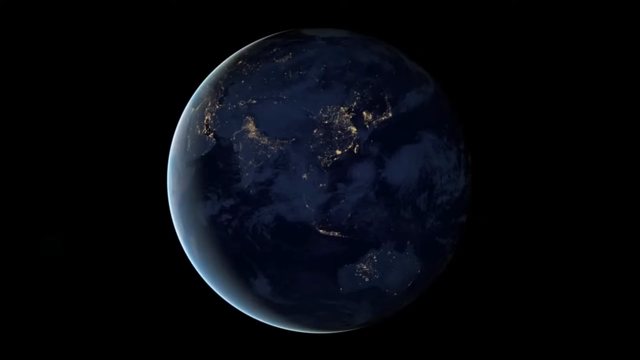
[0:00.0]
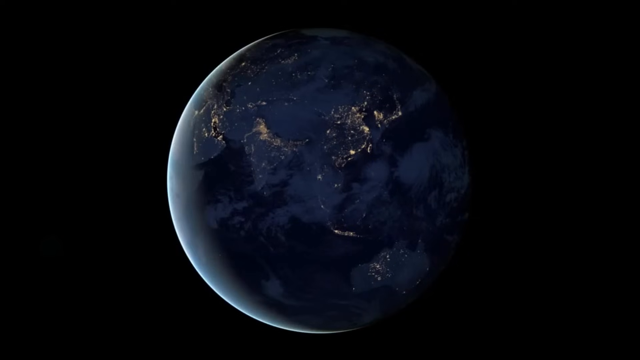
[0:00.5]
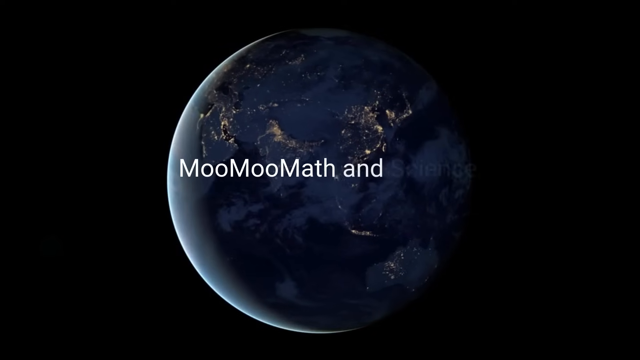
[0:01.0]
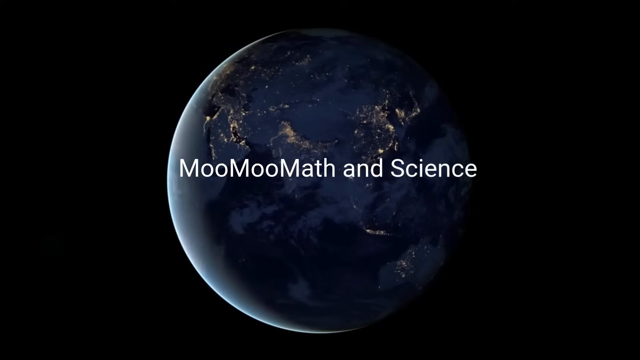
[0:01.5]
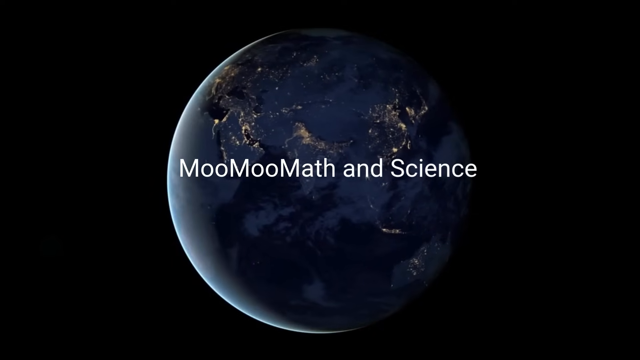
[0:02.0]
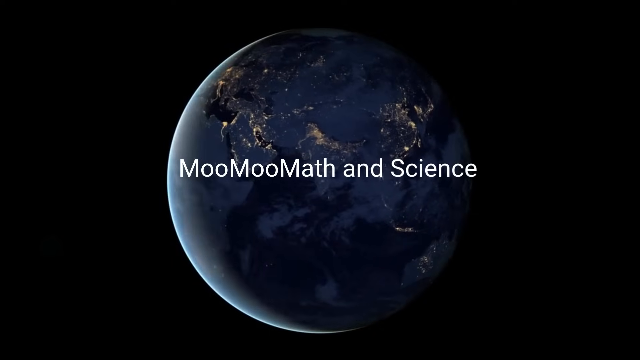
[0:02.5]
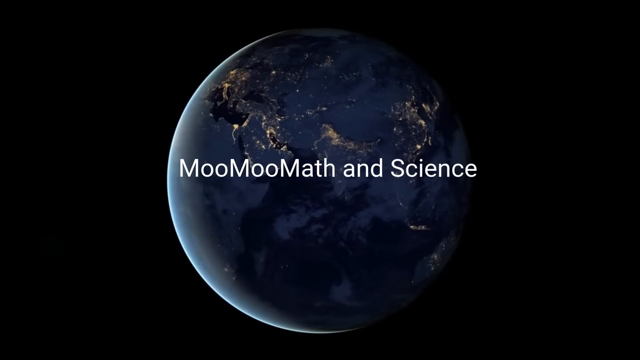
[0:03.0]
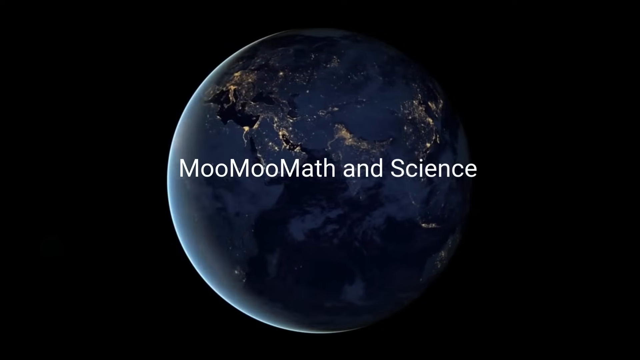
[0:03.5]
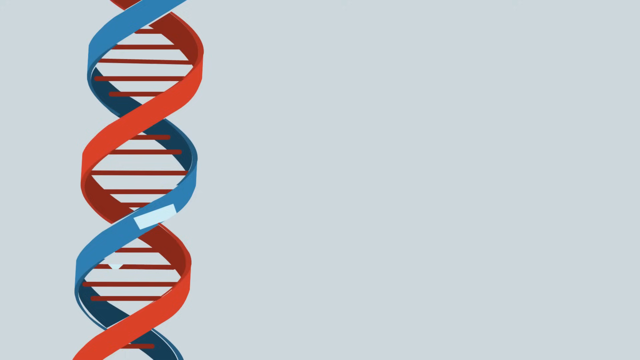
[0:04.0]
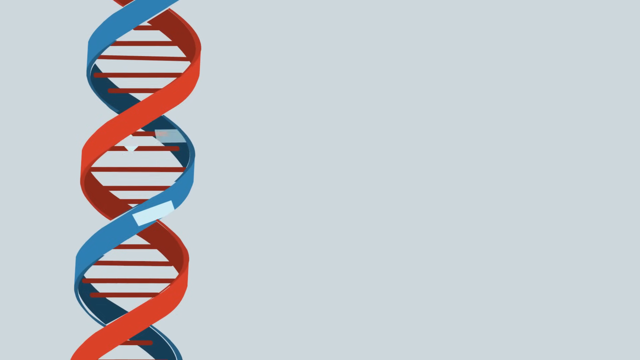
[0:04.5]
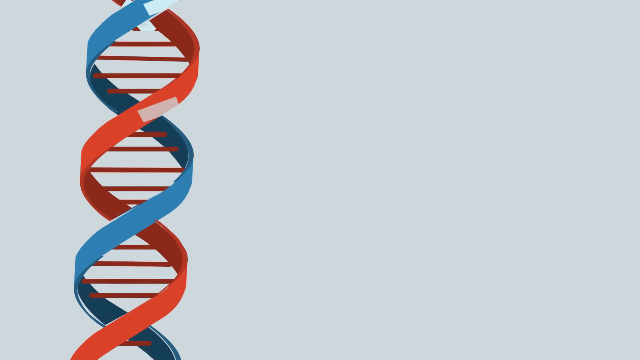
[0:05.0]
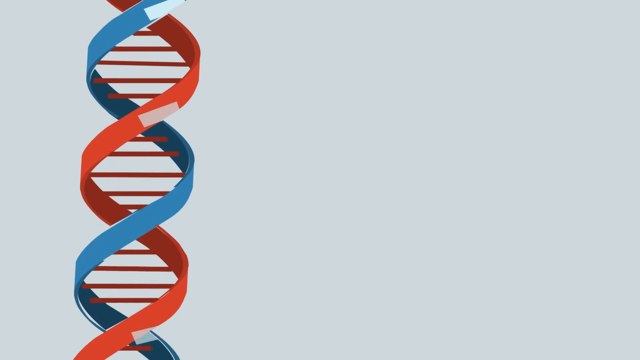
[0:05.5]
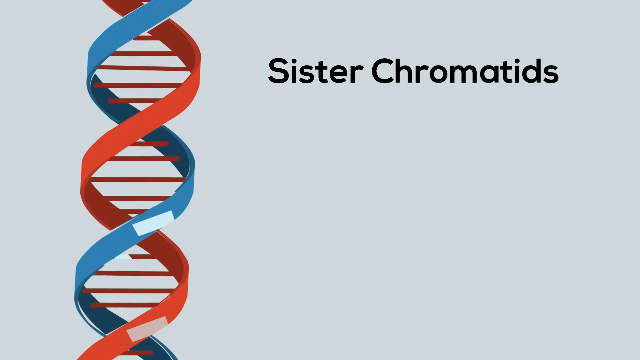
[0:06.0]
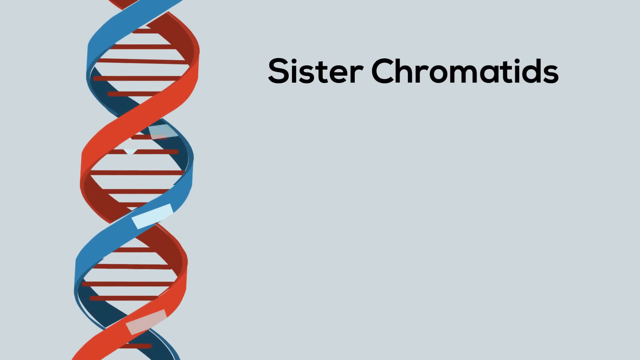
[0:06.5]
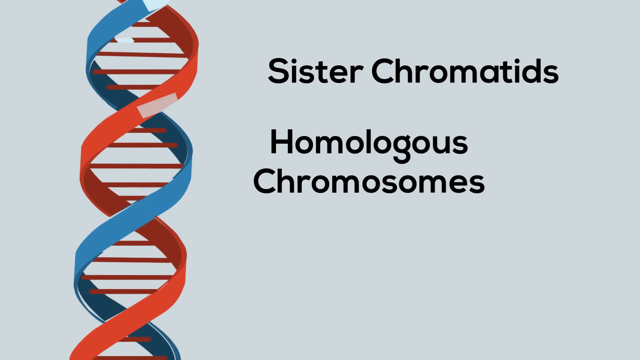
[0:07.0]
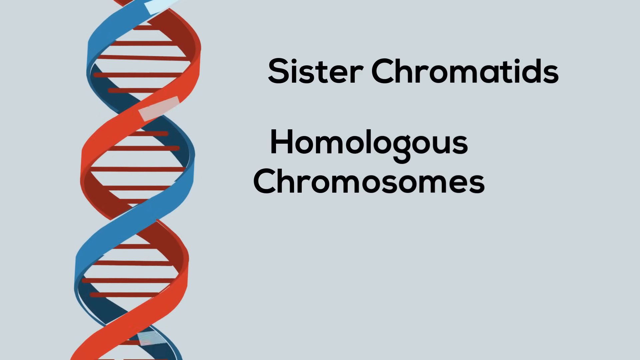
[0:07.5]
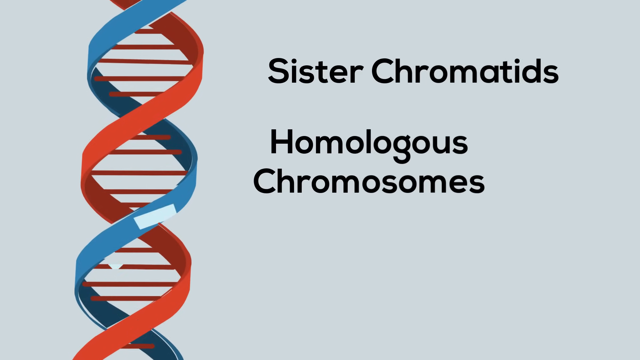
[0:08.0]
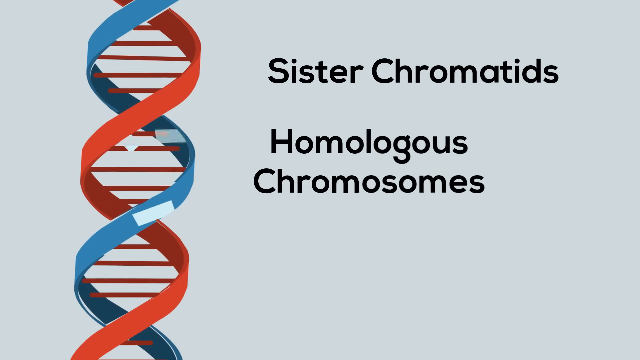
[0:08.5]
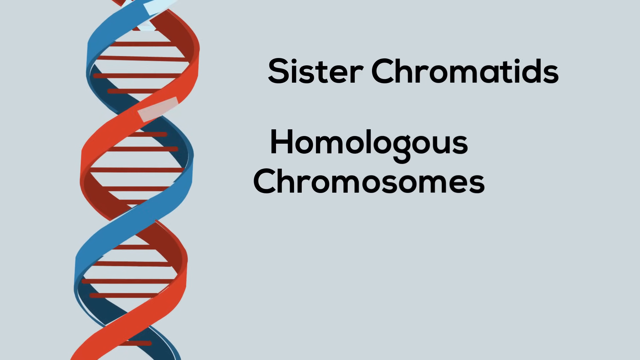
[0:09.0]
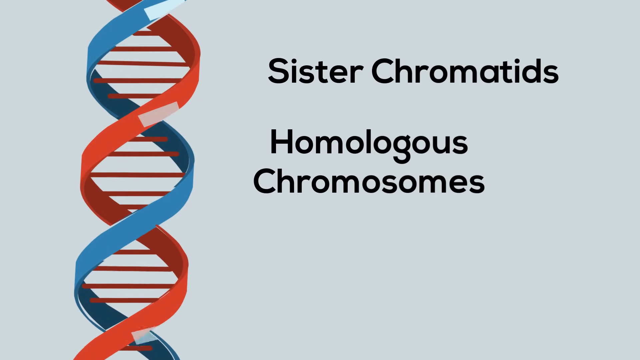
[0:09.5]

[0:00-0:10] The video opens with the title "Moomoo Math and Science" over a space background with the Earth behind it. The next scene shows the title "sister chromatids homologous chromosomes" with a DNA image on the left side. The graphics look good, the video moves at a good speed, and the words are easy to read.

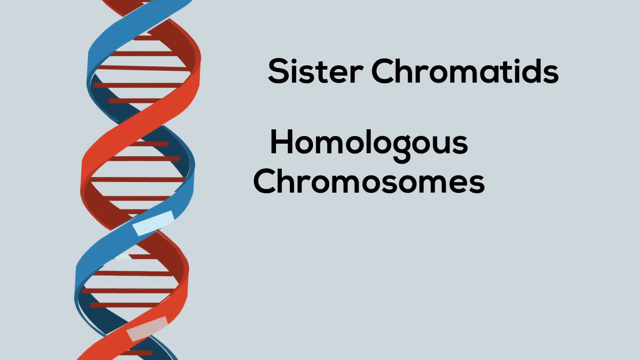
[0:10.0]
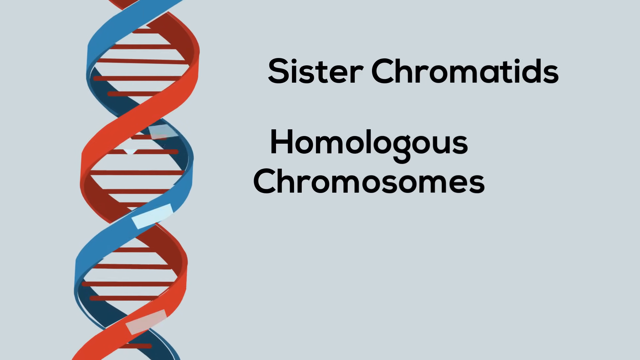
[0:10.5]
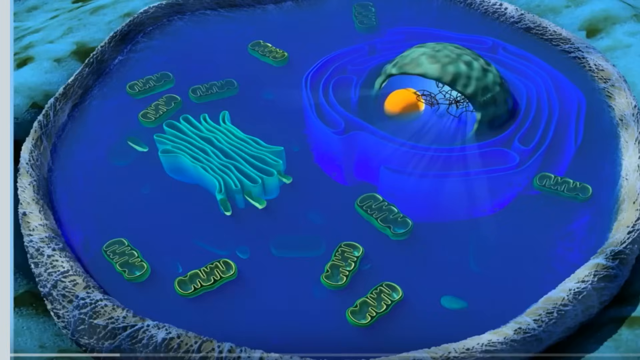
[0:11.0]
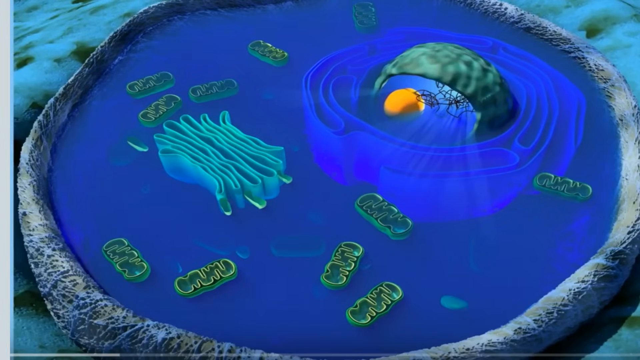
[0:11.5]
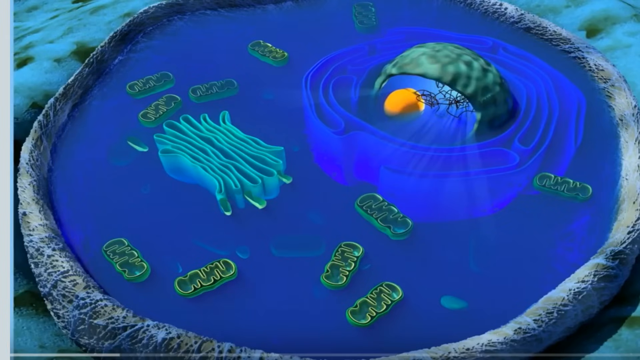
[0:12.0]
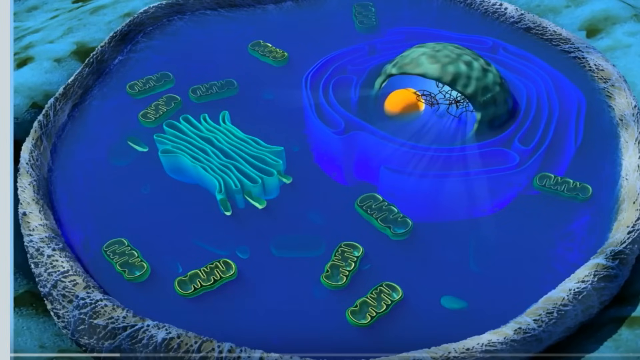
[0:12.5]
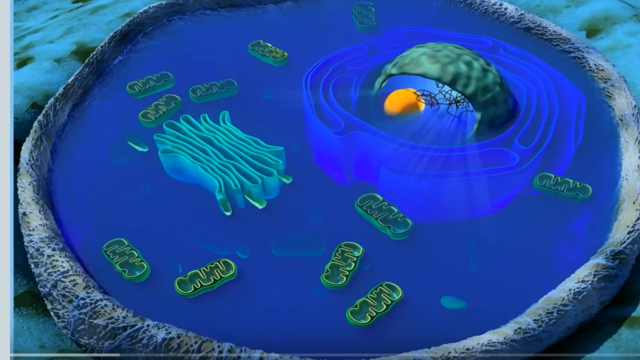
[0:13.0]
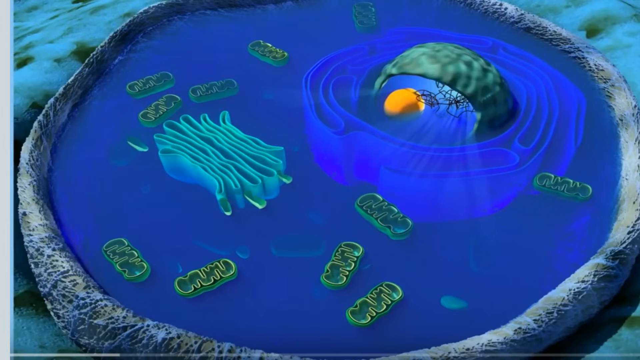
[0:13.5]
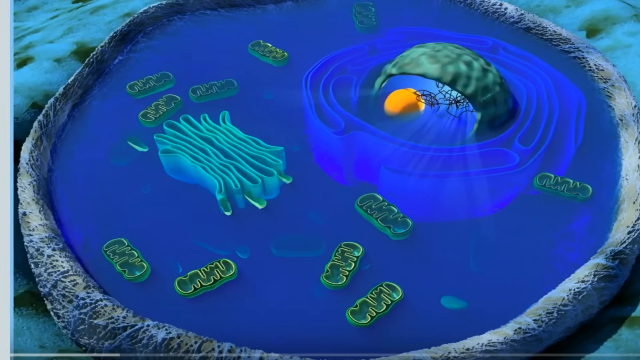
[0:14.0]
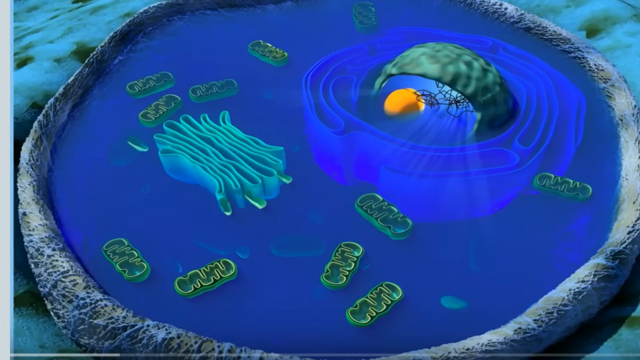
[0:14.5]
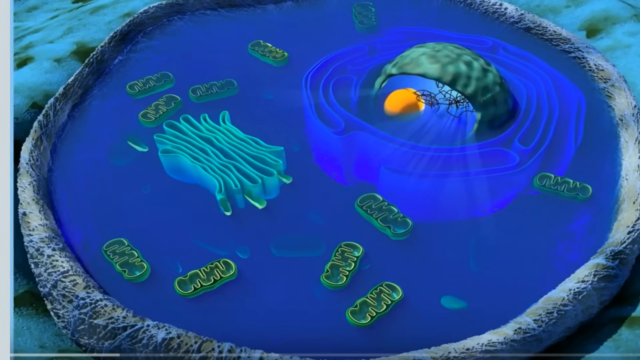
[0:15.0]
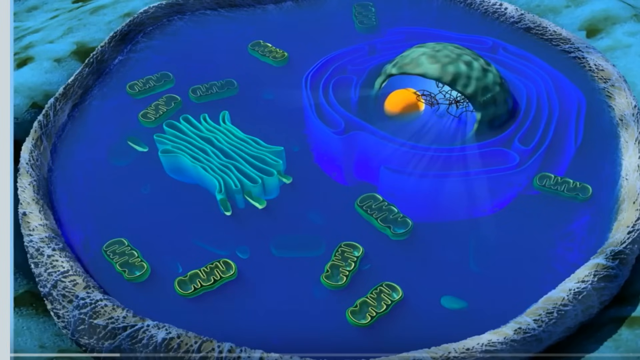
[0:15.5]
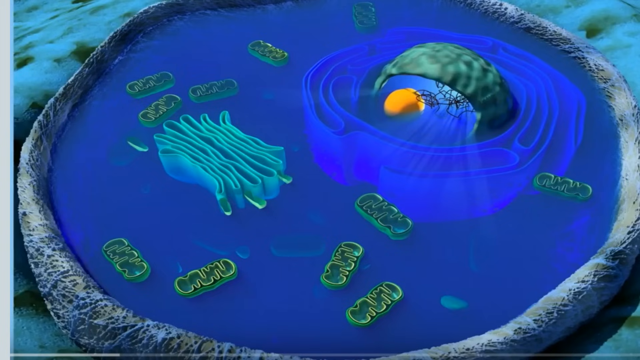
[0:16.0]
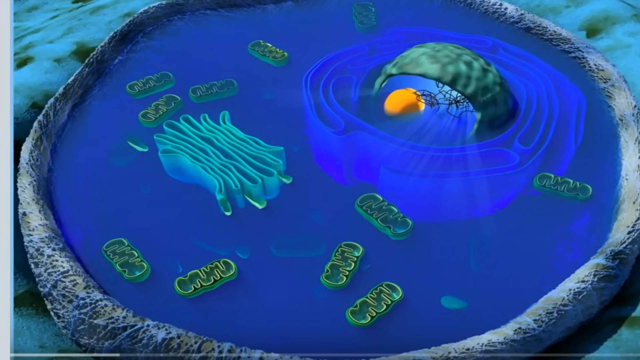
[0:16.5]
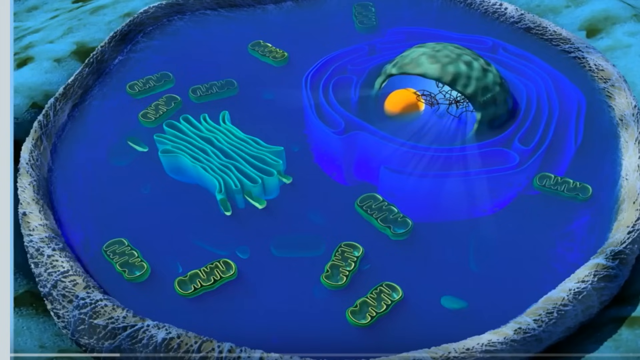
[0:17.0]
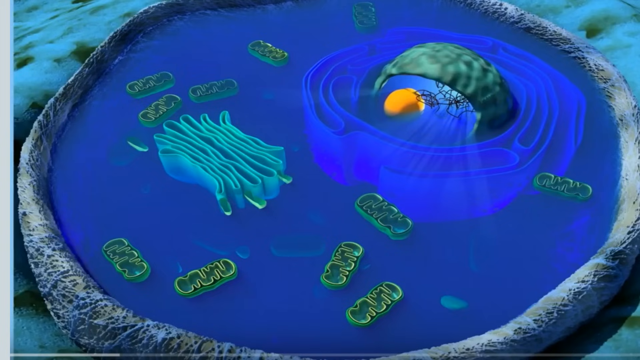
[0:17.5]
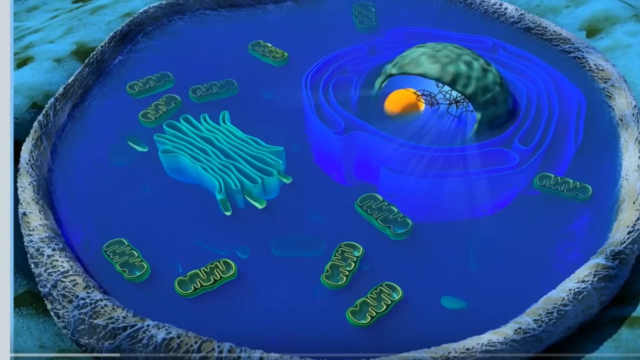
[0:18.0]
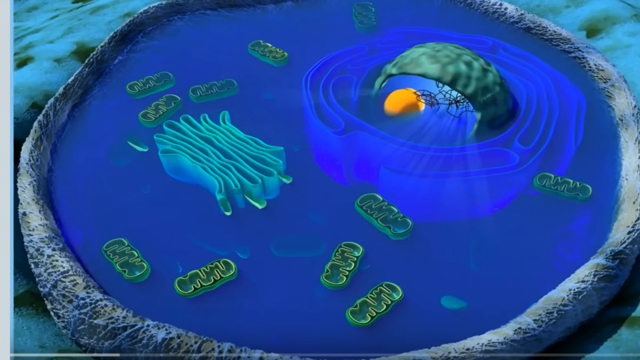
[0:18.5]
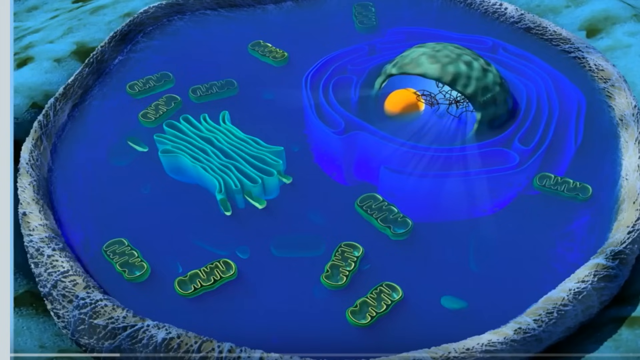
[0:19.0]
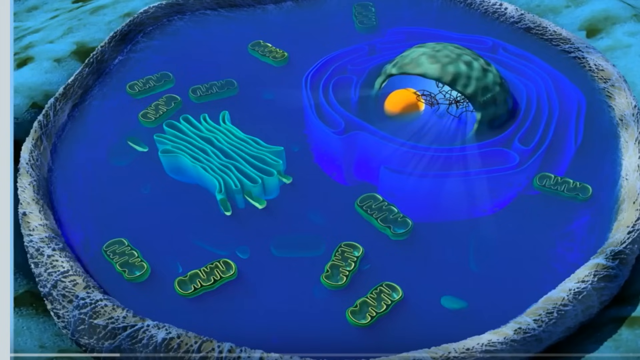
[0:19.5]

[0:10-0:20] The title "sister chromatids homologous chromosomes" is on screen. Next, a pool-like structure appears, and the view zooms in further into the structure of the chromosome, showing its different features against a blue background. The fluid structure inside the chromosome is shown, with structures that are kind of circular, some strings that are mostly green, and an orange-like feature, illustrating the different parts inside.